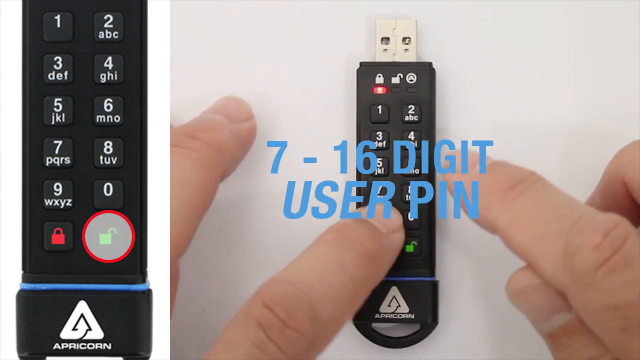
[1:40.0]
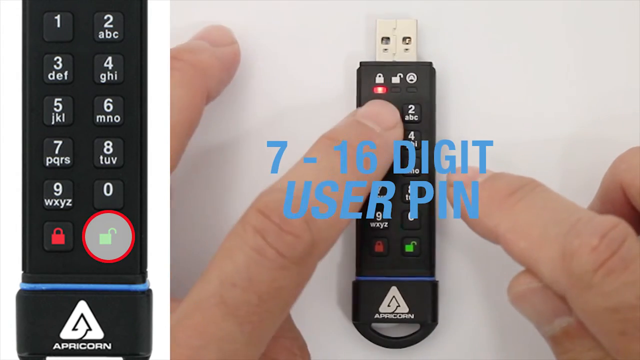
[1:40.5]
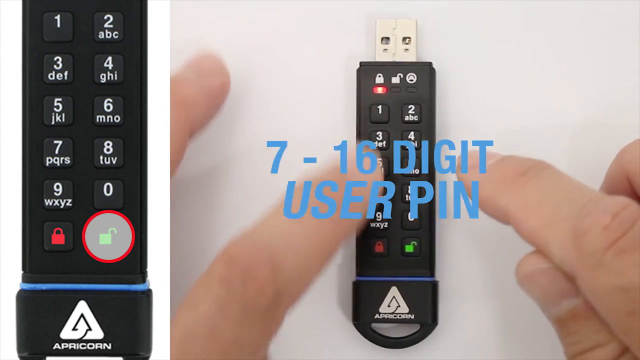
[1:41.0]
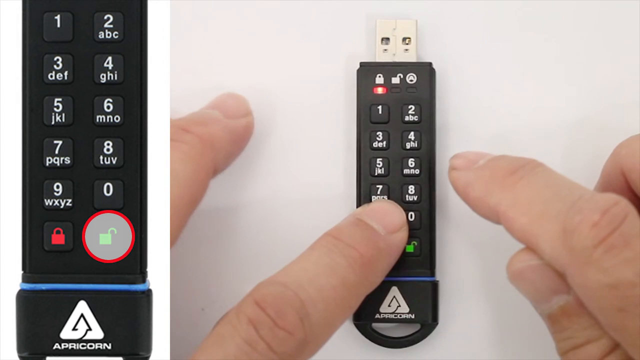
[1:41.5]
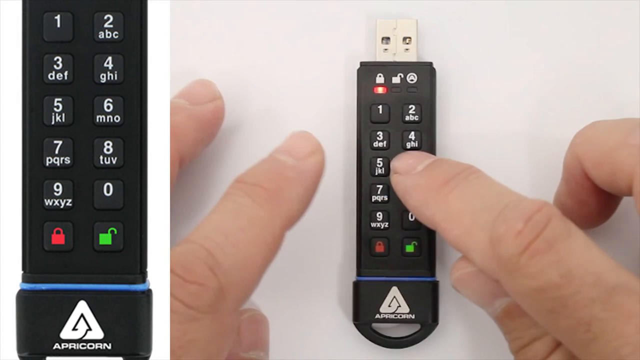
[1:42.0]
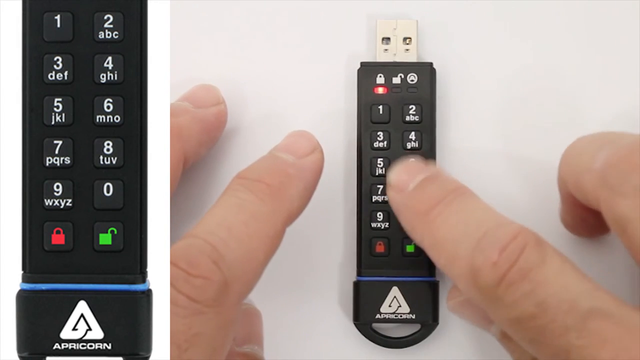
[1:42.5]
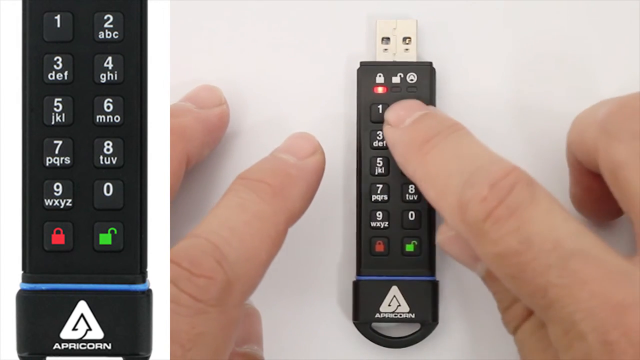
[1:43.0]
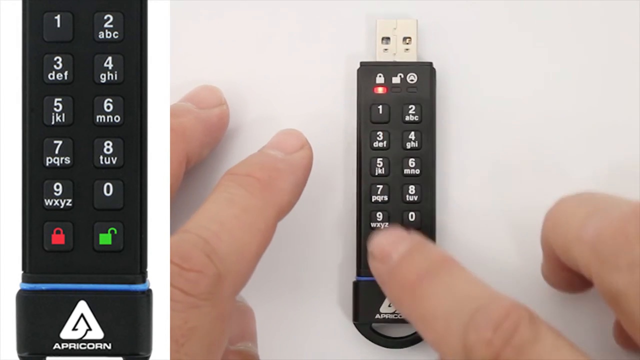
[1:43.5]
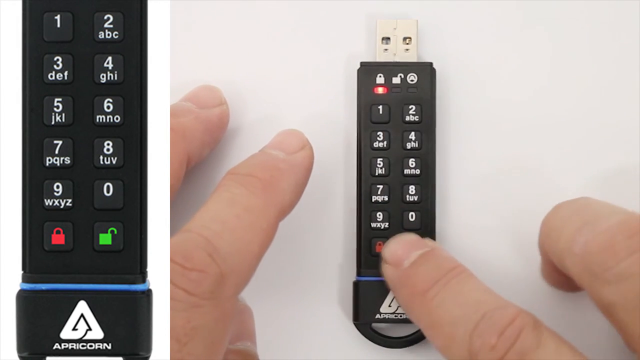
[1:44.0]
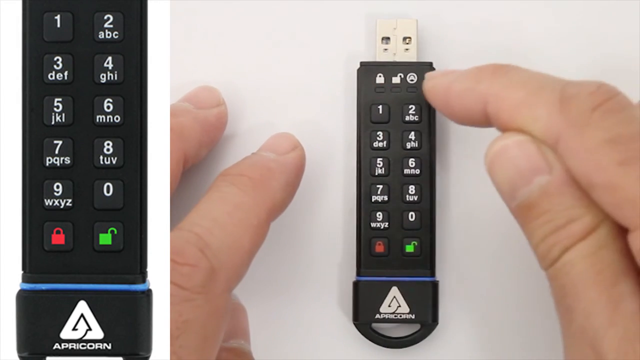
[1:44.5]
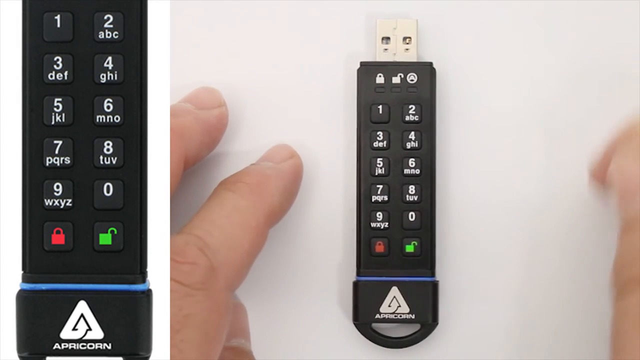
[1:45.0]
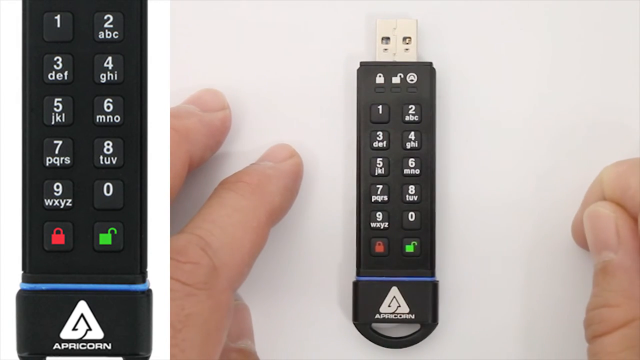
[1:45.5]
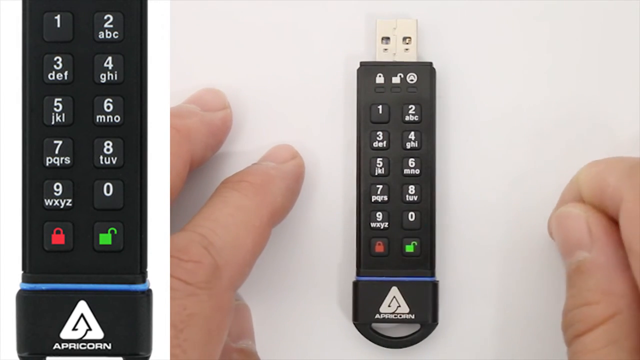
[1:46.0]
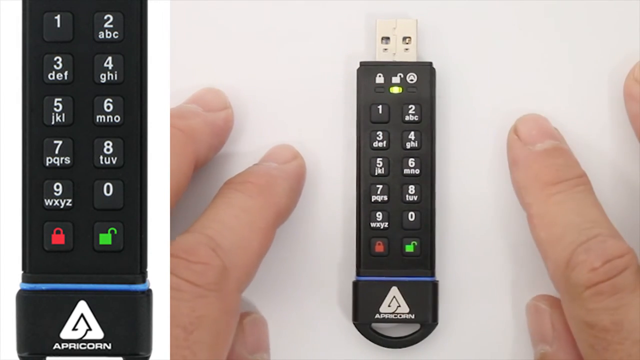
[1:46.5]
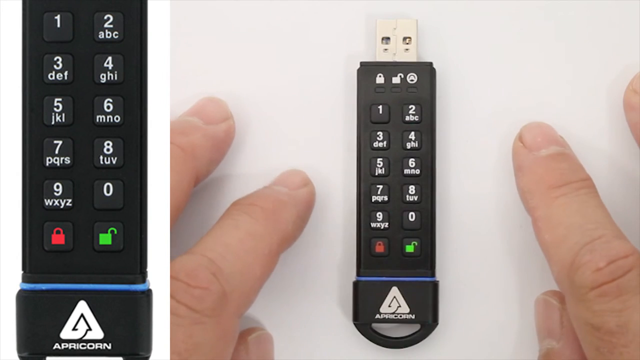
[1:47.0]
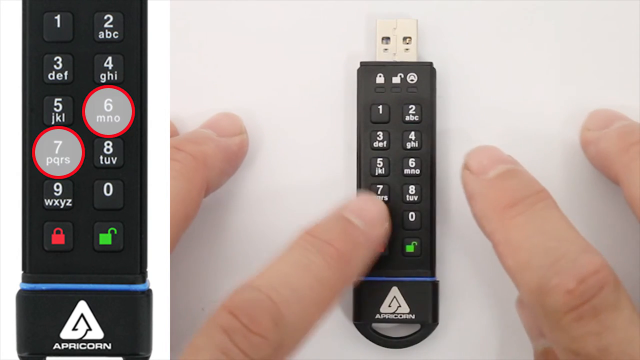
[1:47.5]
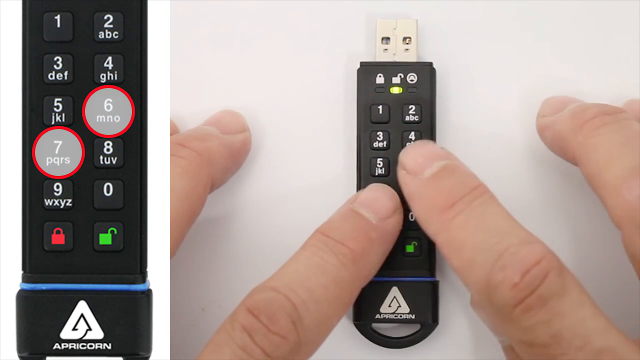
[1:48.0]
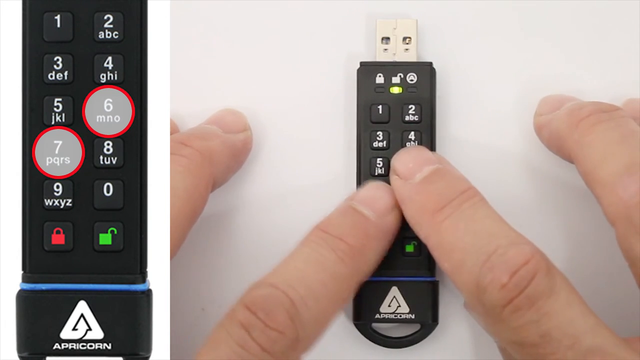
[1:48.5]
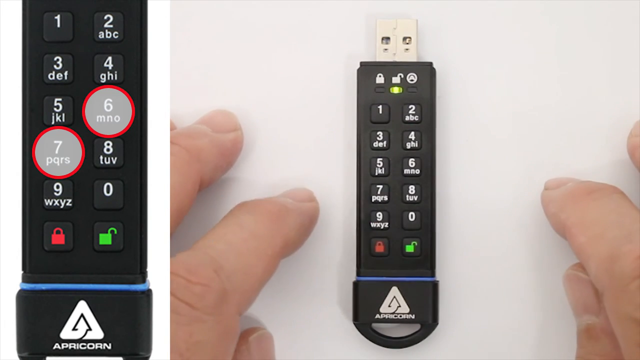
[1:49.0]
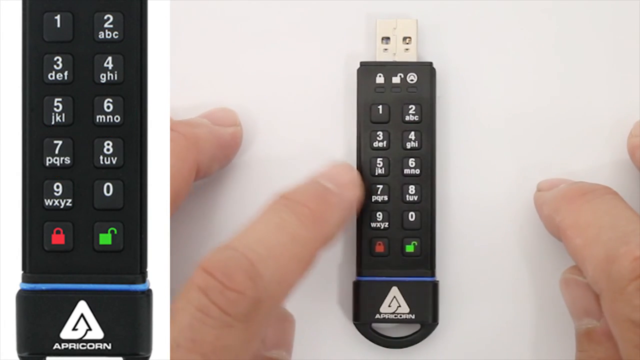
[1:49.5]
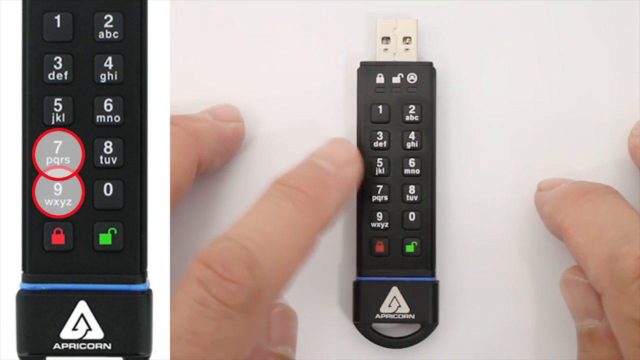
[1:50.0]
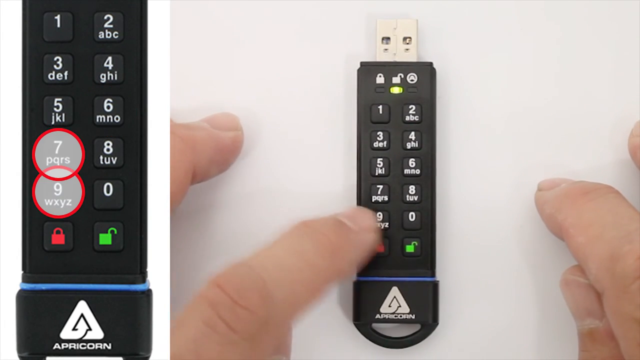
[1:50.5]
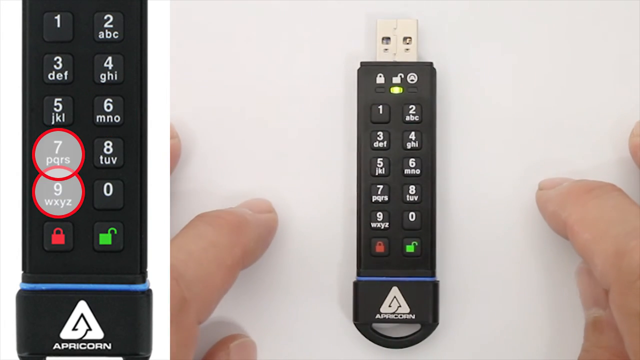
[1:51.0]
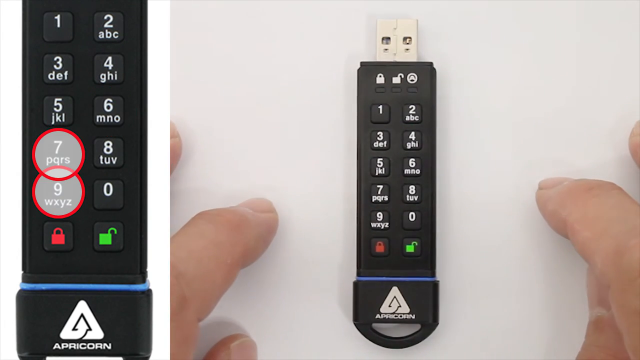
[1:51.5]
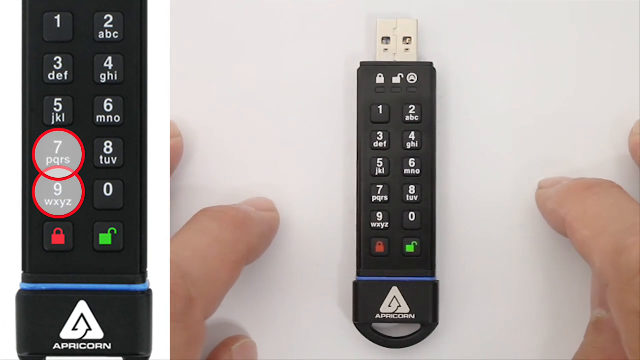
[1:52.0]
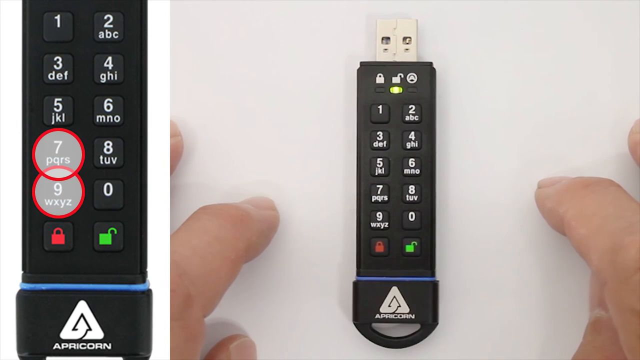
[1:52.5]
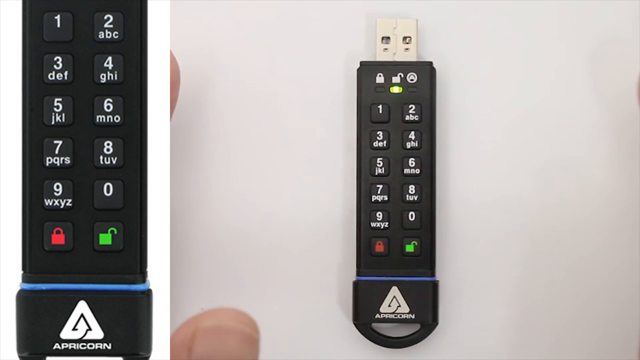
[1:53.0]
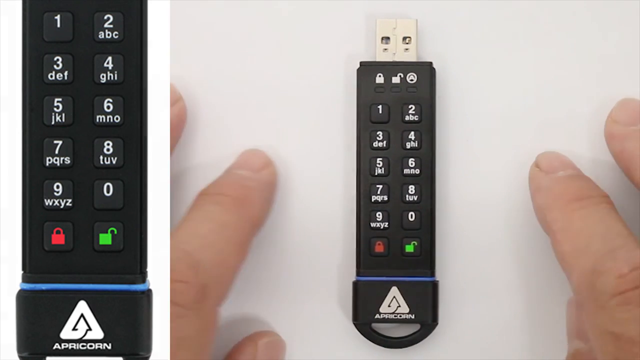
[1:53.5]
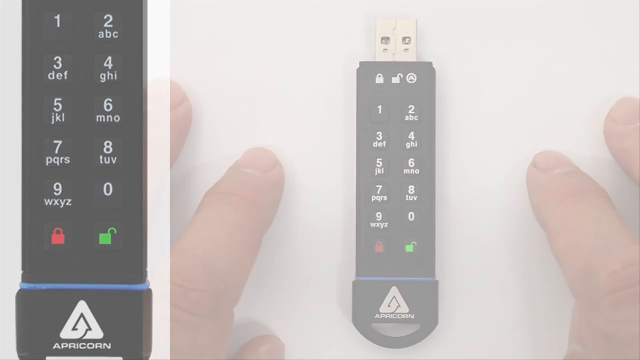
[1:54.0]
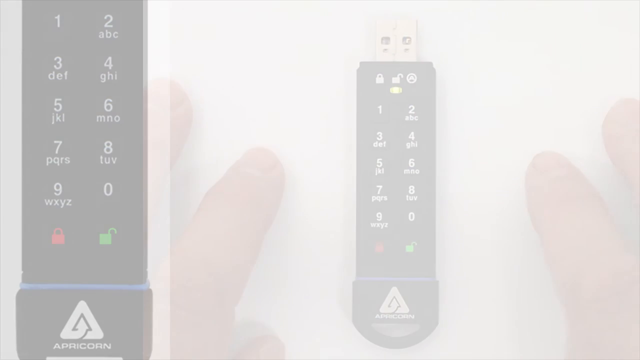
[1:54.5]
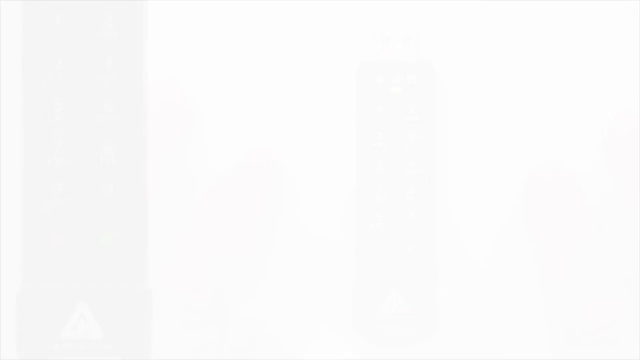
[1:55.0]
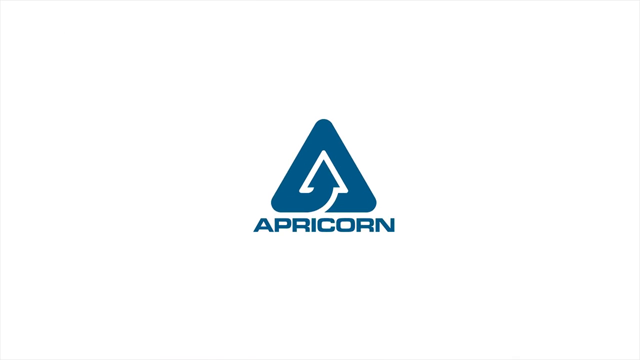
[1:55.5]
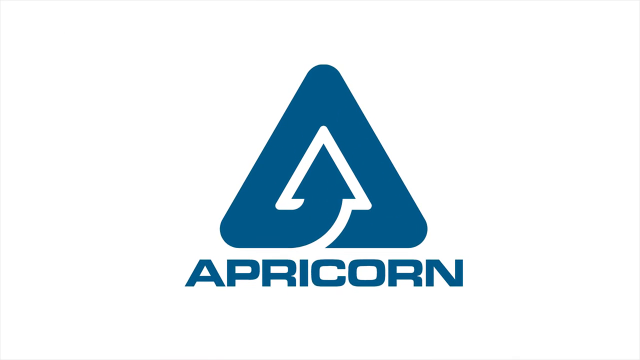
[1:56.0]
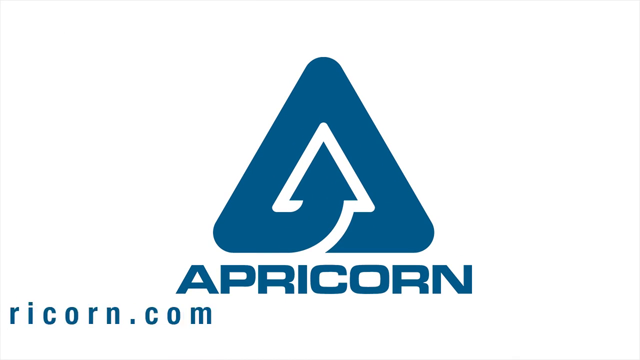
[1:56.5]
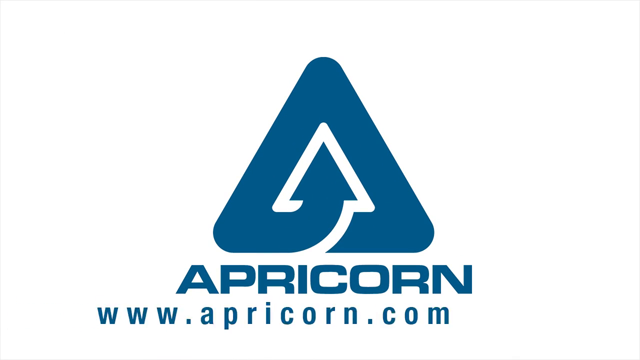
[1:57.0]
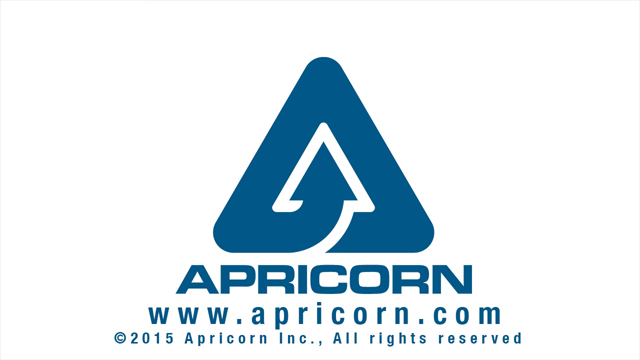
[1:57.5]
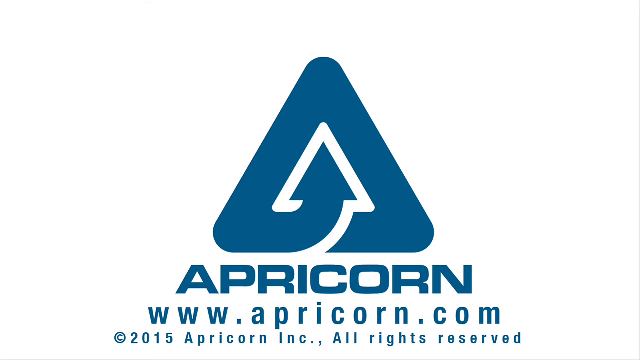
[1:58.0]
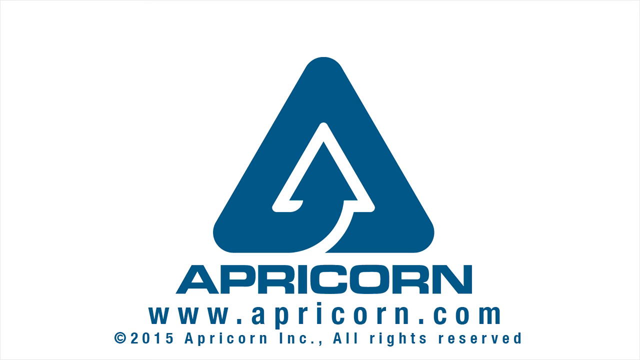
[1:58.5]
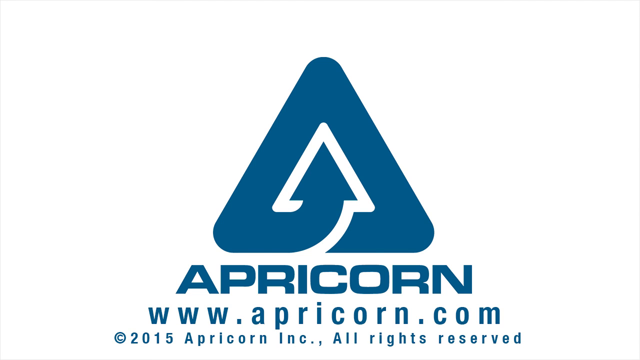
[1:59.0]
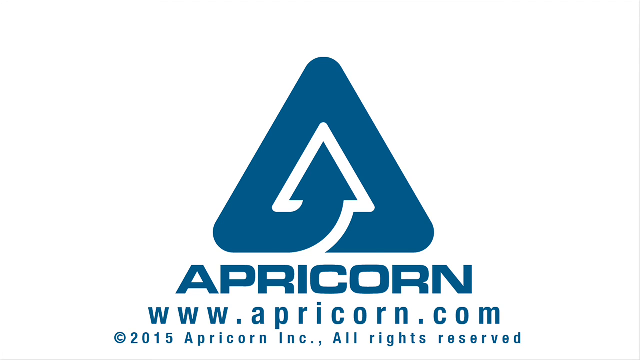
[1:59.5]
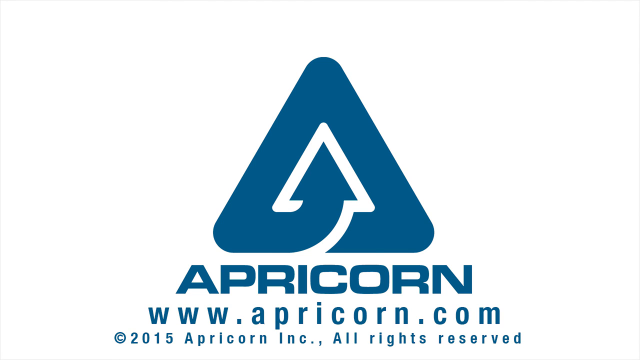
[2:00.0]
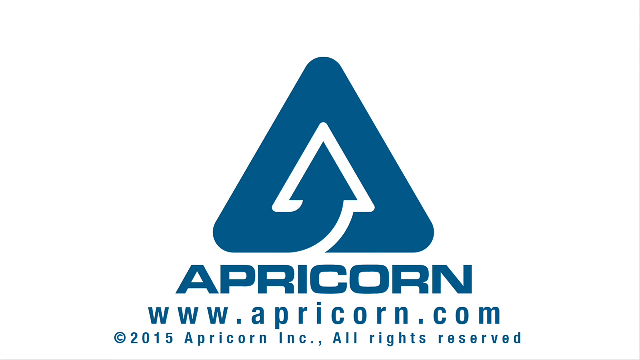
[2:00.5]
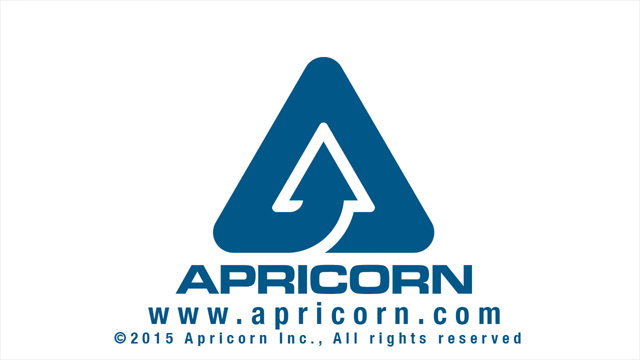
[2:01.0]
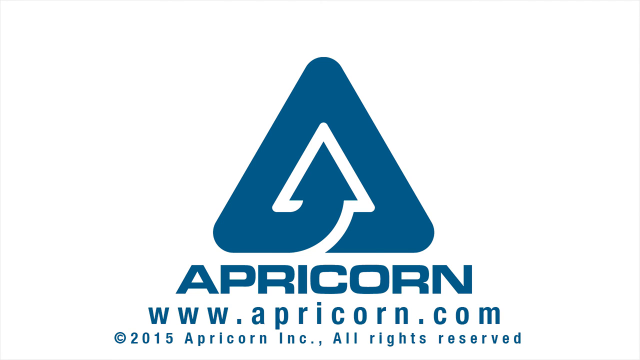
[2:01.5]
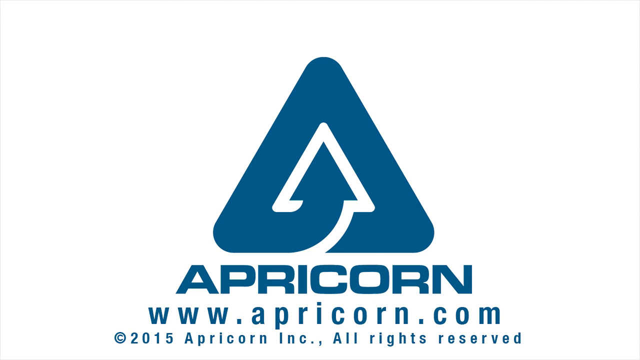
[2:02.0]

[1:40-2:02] The 7-to-16-digit user PIN is entered to unlock the device, with keys 7 and 9 pressed together. "APRICORN" and "apricorn.com" appear. The device's keypad is shown: number keys from 0 to 9, letters from A to Z, a red lock button in the form of a padlock, and a green button.